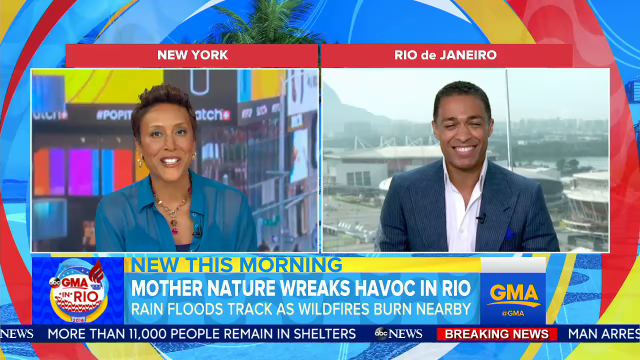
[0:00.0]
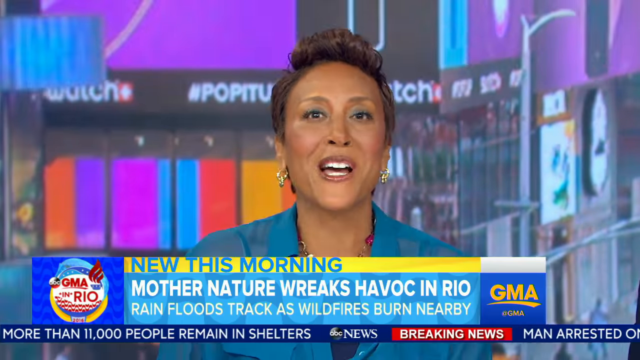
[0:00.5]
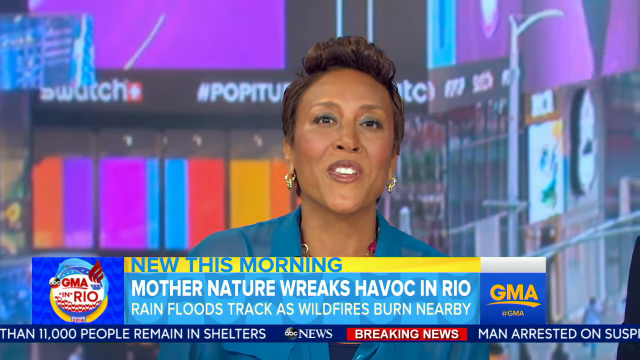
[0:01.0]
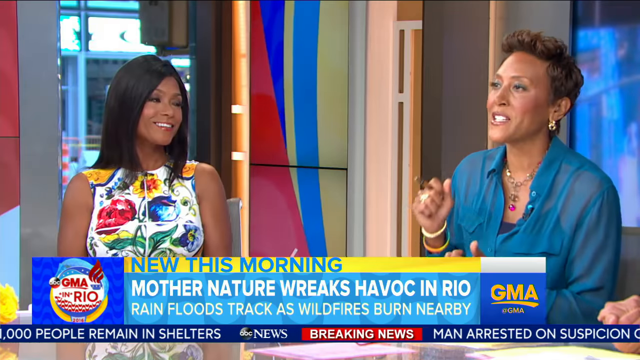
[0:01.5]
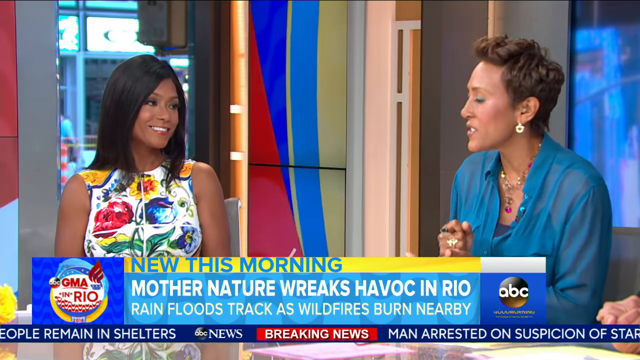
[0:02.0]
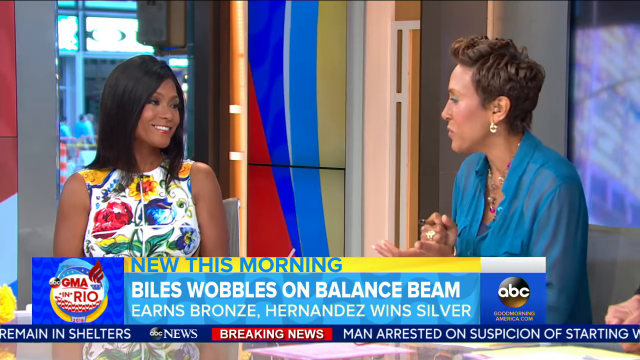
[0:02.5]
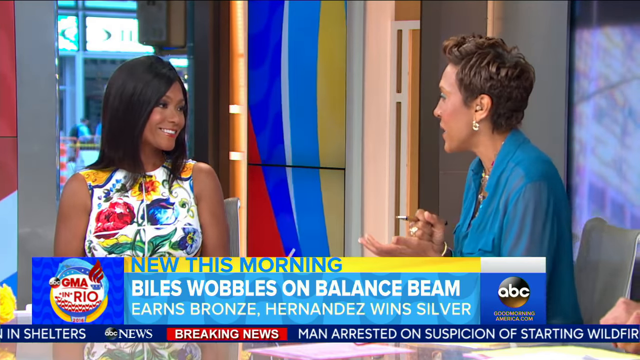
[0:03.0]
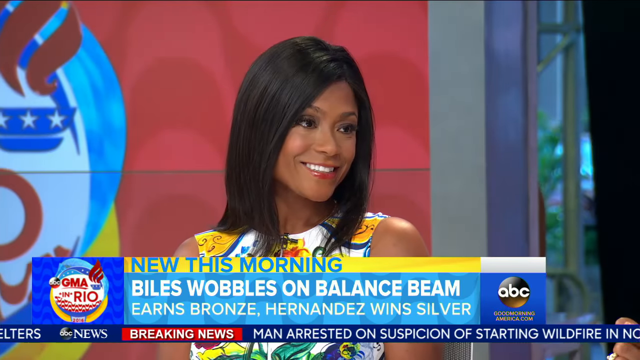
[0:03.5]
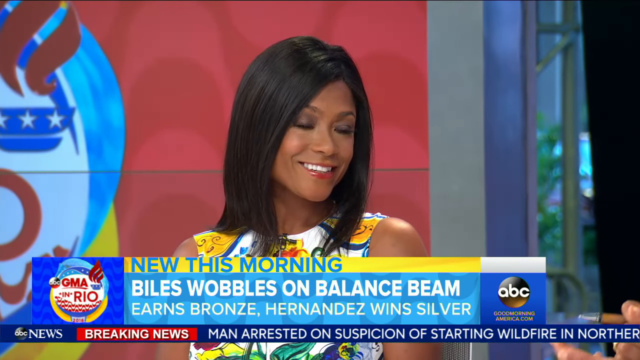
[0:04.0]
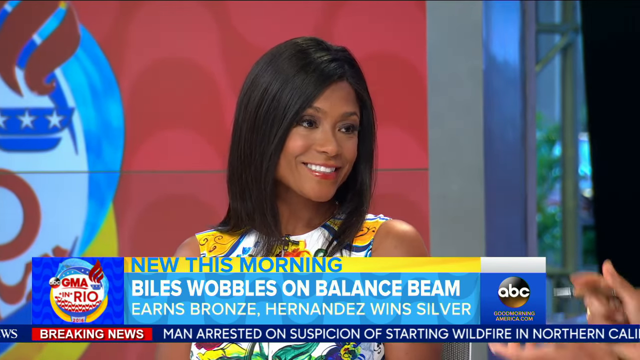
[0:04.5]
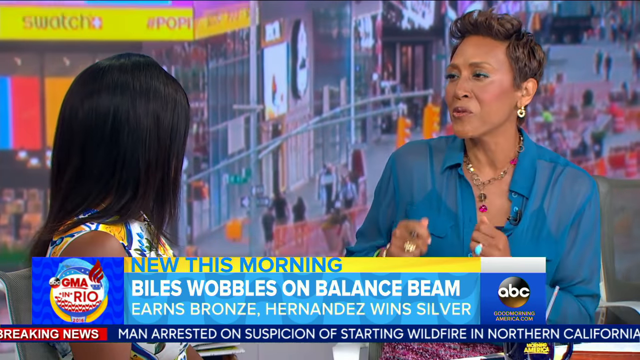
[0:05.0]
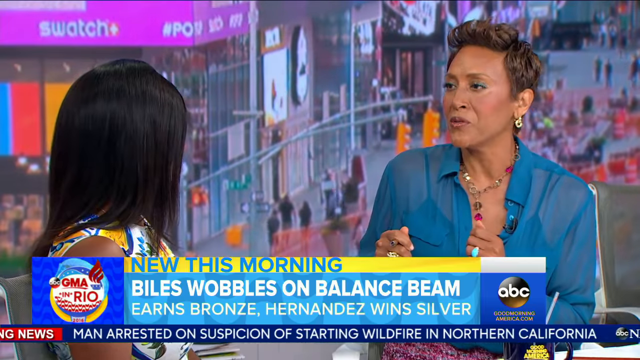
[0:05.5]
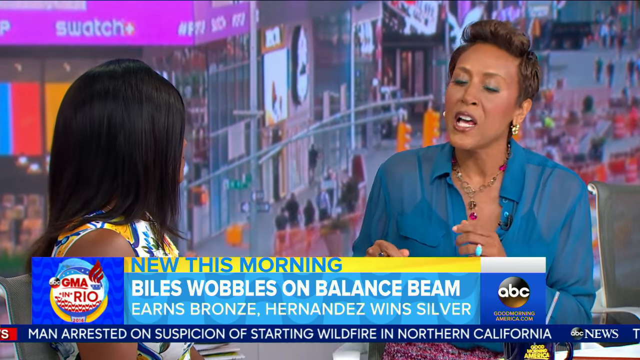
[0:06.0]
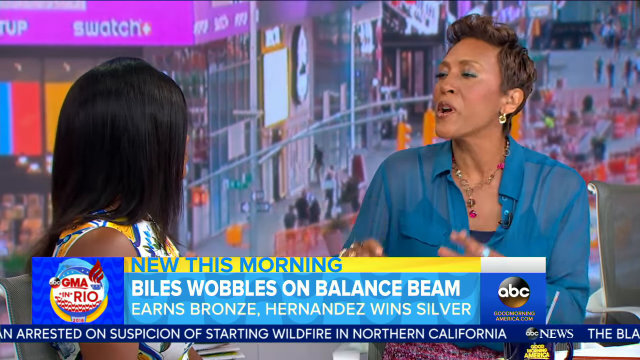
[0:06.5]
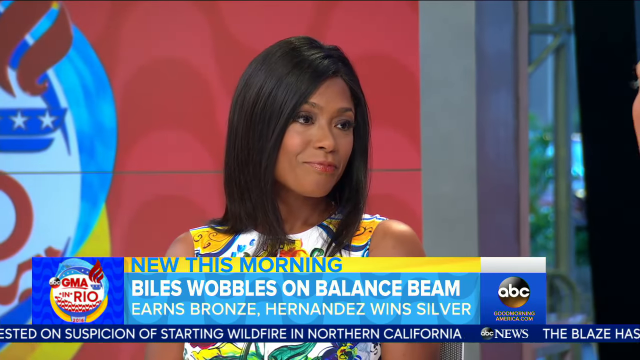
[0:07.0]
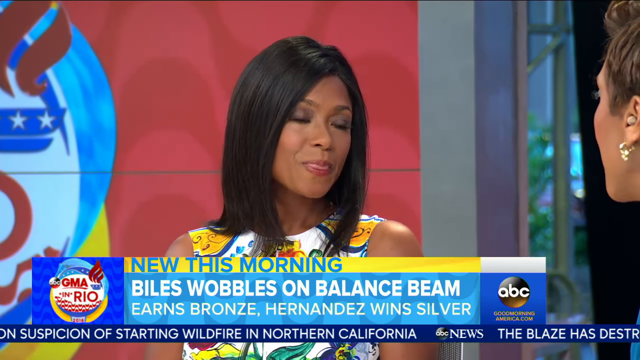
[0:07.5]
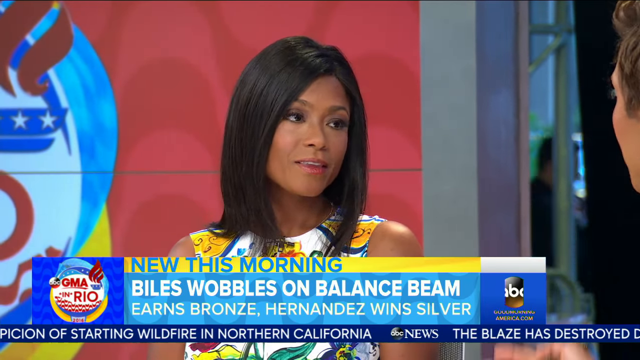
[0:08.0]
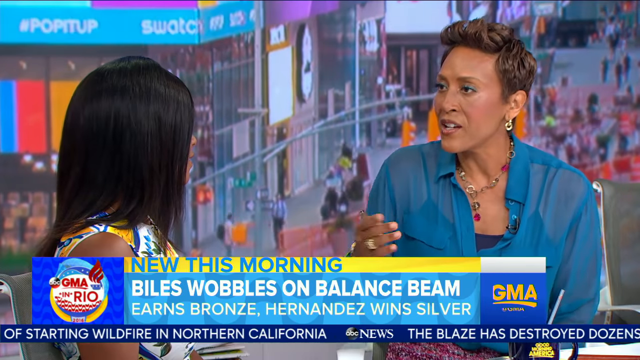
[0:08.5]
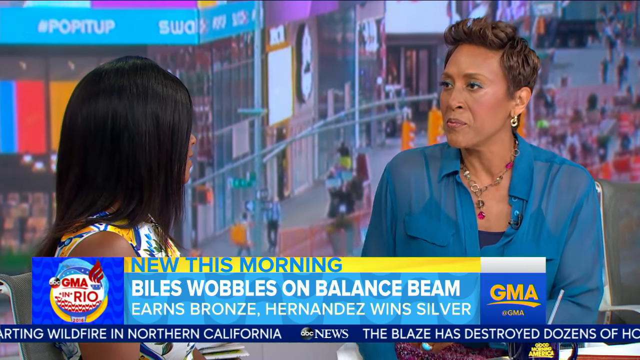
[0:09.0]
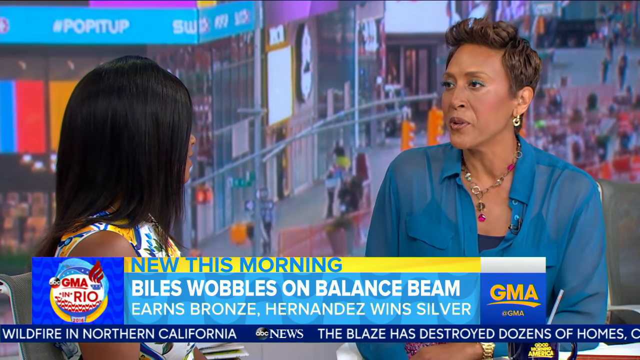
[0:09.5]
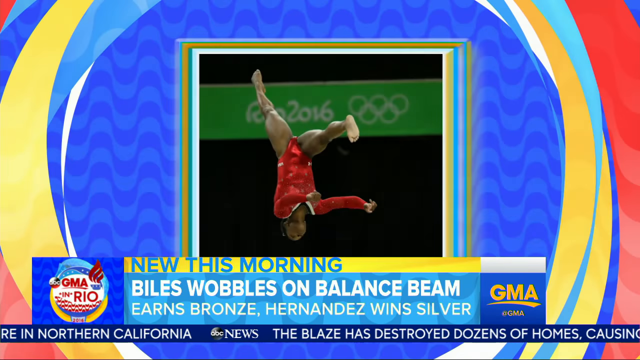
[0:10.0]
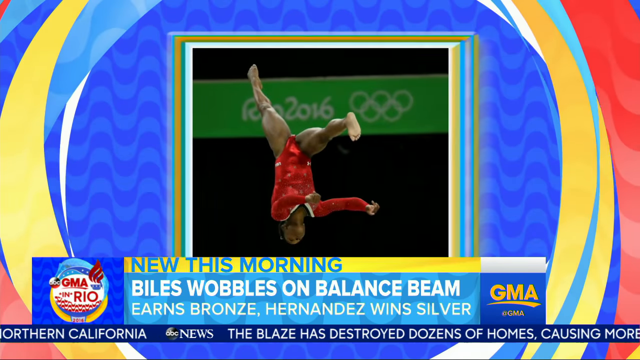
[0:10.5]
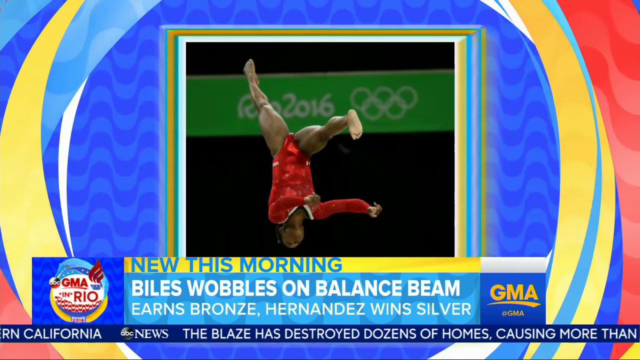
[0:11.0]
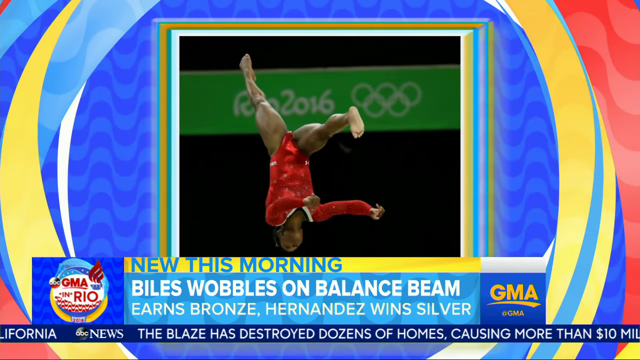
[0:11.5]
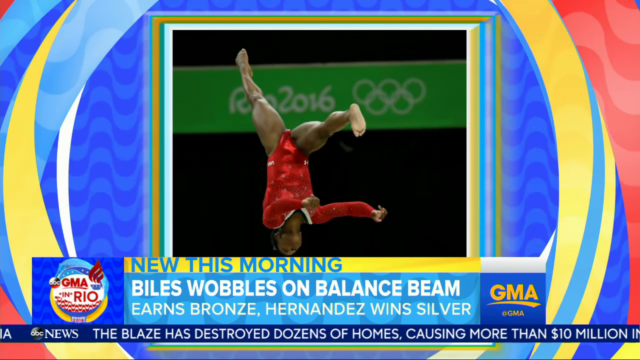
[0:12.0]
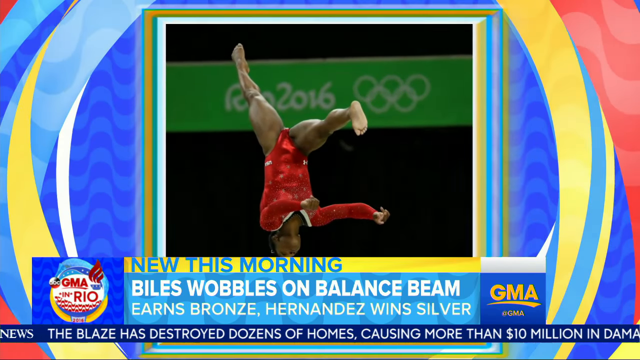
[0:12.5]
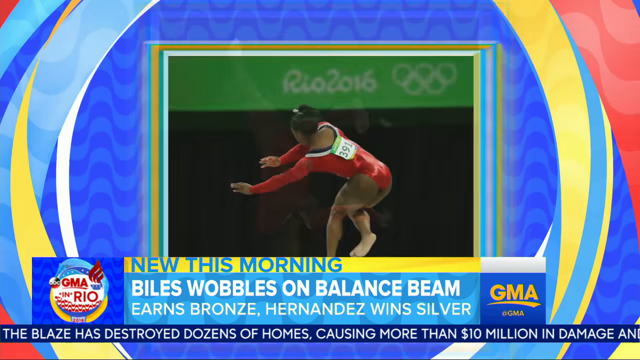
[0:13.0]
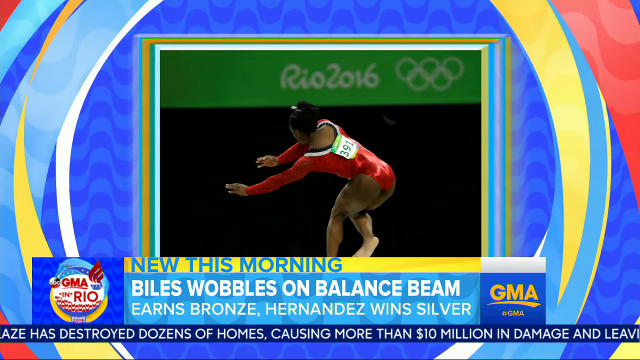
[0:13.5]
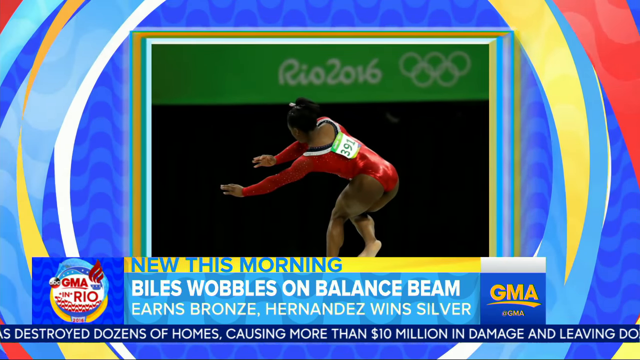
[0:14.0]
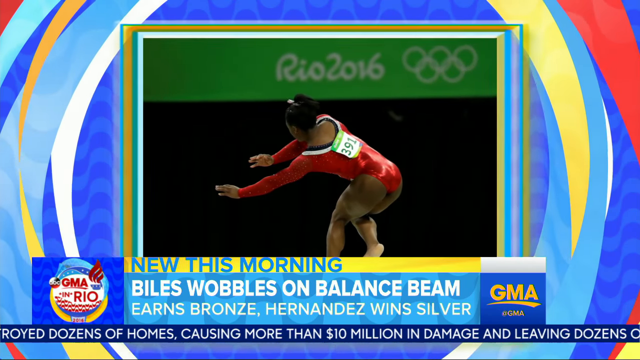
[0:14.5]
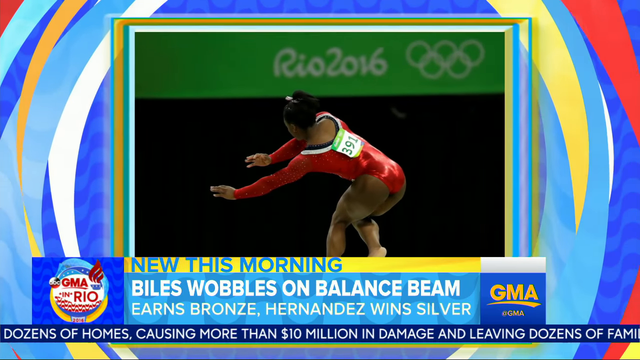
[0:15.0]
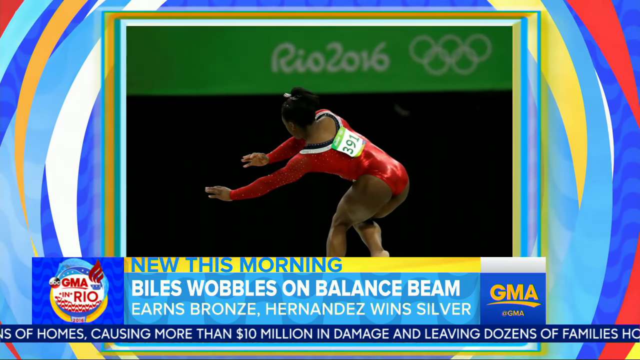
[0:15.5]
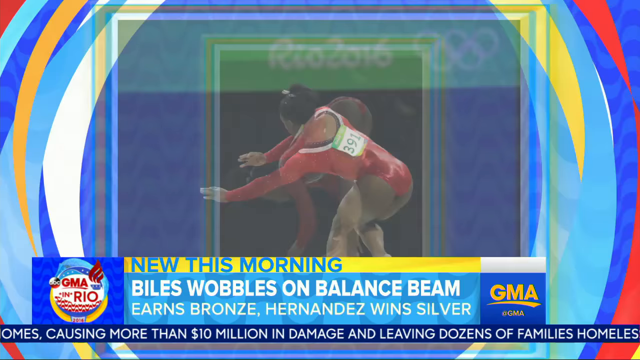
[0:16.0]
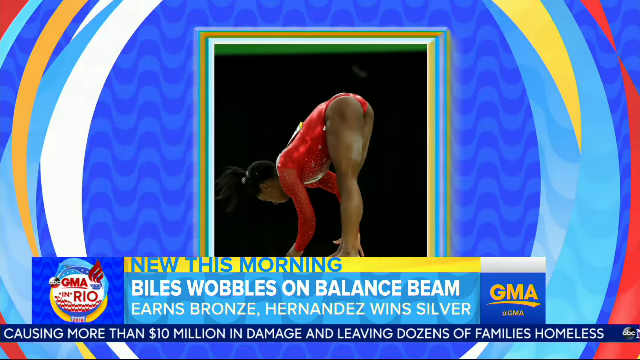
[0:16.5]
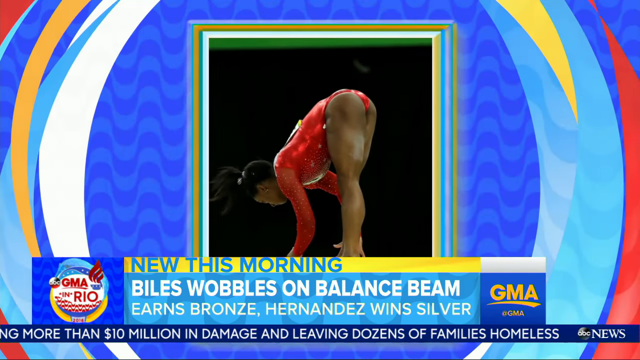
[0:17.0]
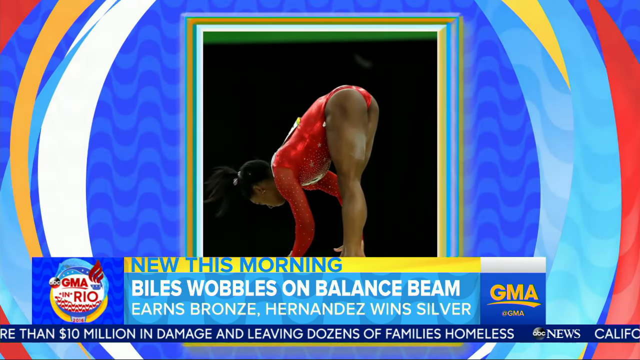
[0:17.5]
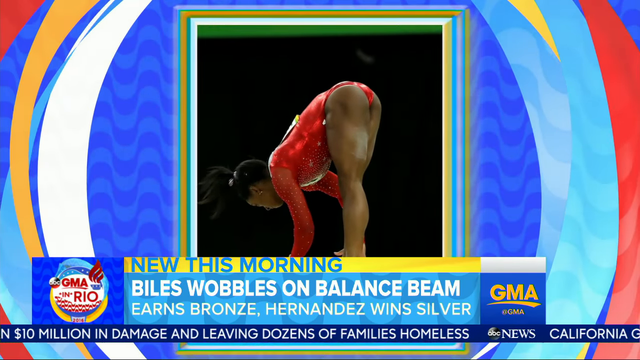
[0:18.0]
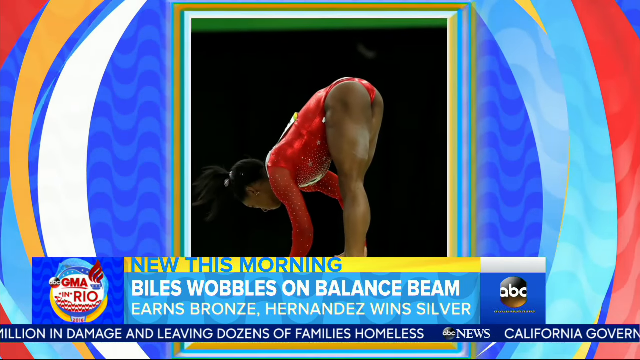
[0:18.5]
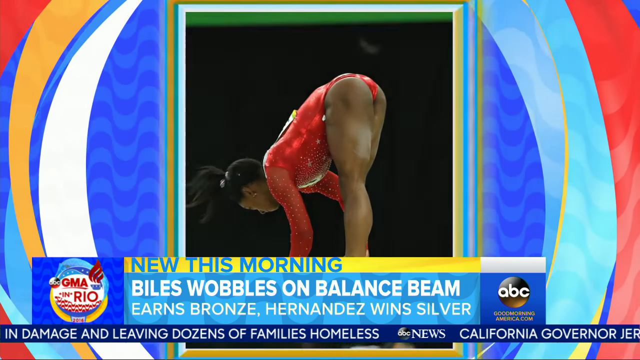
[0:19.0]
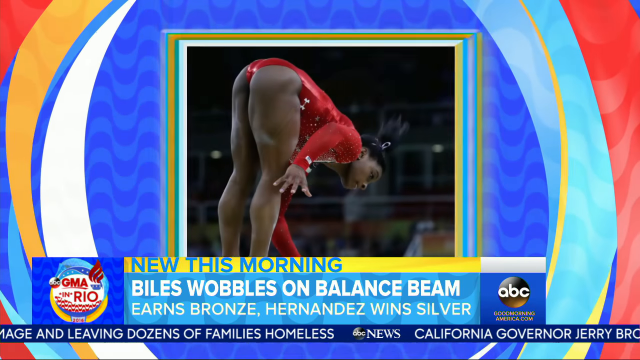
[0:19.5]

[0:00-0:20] A screen shows Robin Roberts on the left, in New York, and a dark-complexioned man who looks Hispanic, in Rio de Janeiro. He wears a white button-up shirt with no tie and a navy blazer over it, with a microphone clipped to the left side of the blazer. Robin Roberts wears a necklace and an open turquoise blouse over what looks like a dark blue tank top. On screen it says "news this morning." The woman Robin Roberts is talking to has very white teeth and shiny, styled black hair. They sit there laughing together; Robin Roberts and the man in Rio both have very white teeth. The man looks like he is sitting in front of an area with water, and there might be some boats behind him, though they would be big if they are boats.